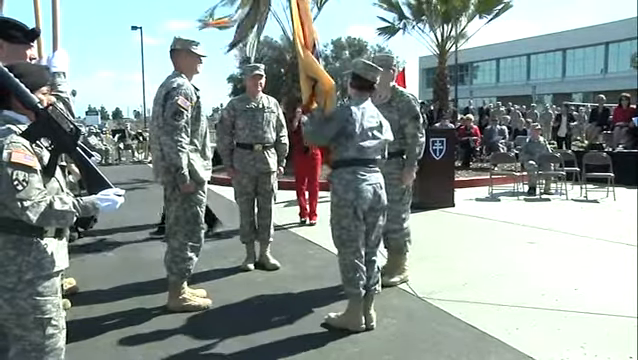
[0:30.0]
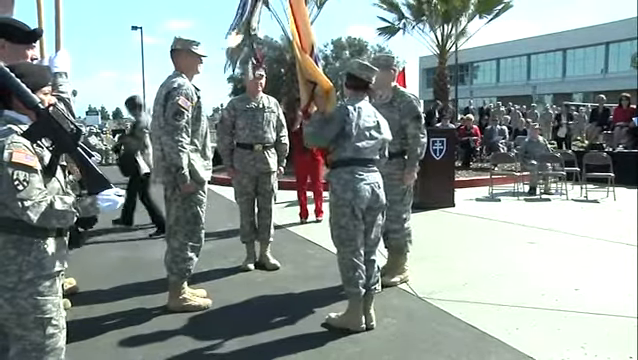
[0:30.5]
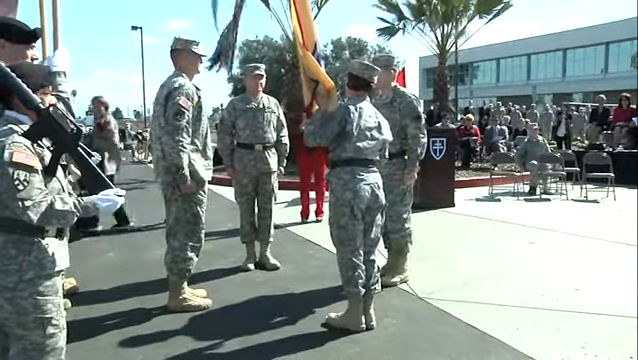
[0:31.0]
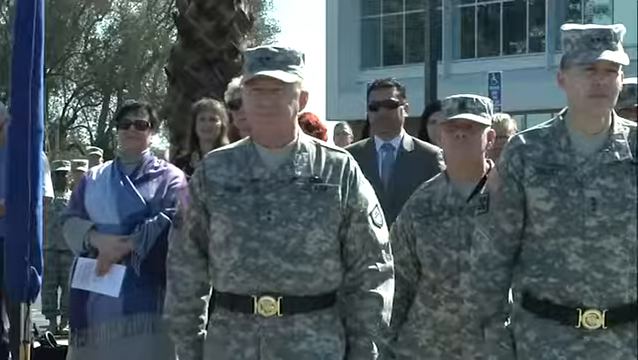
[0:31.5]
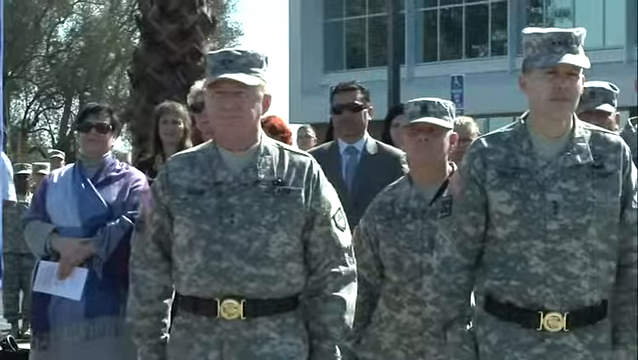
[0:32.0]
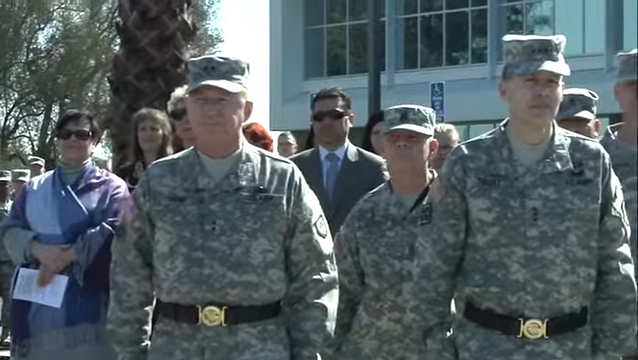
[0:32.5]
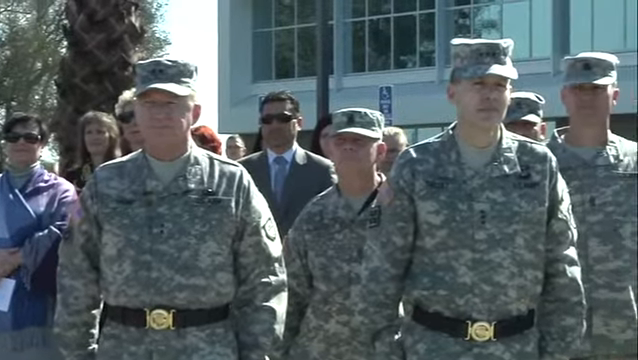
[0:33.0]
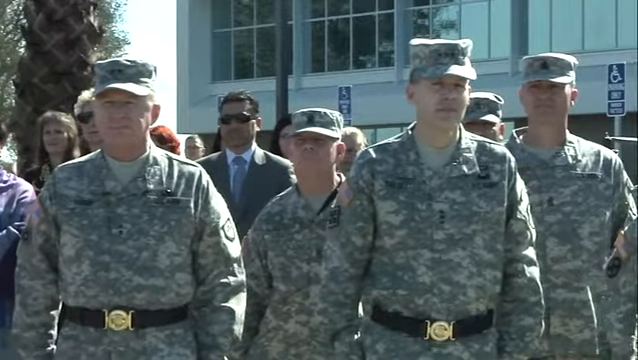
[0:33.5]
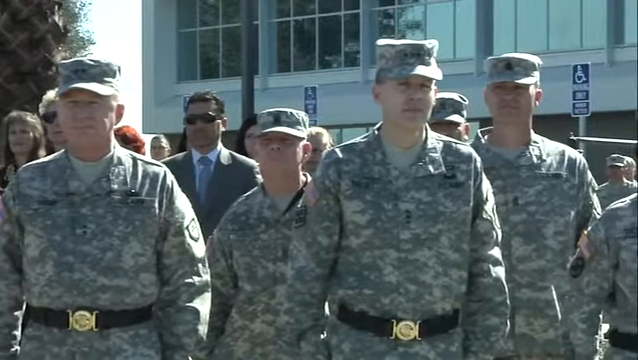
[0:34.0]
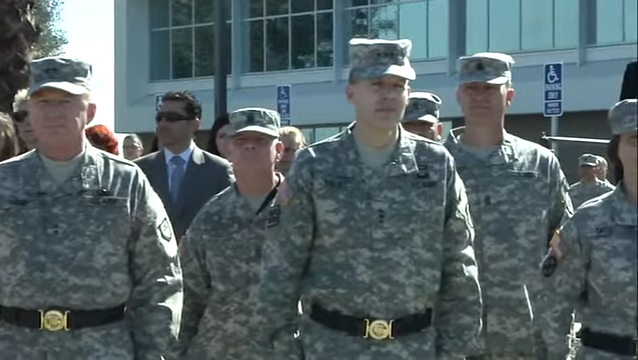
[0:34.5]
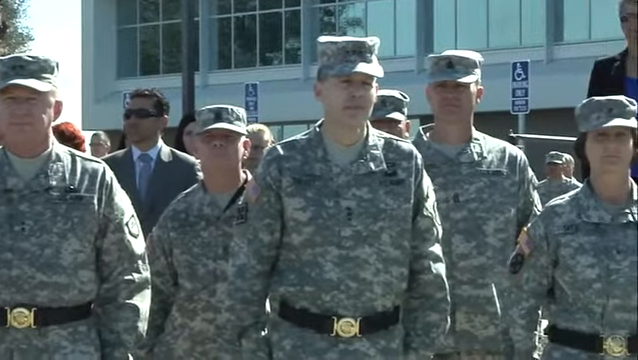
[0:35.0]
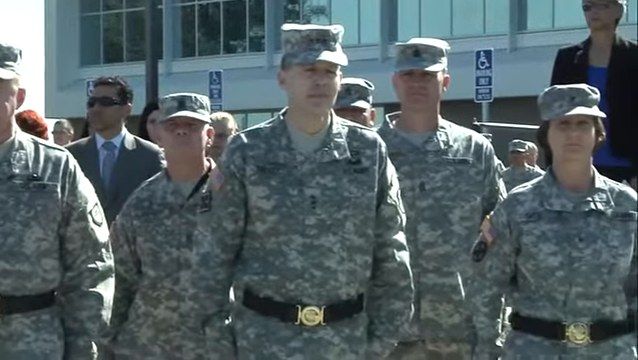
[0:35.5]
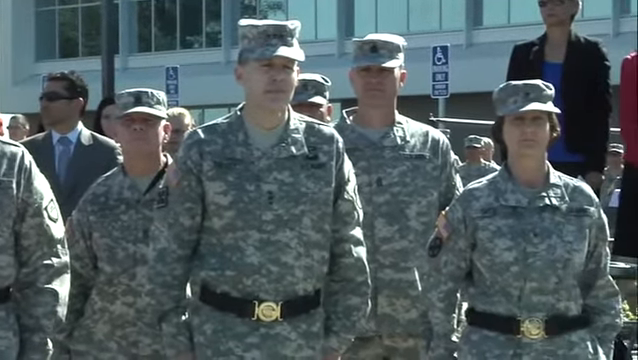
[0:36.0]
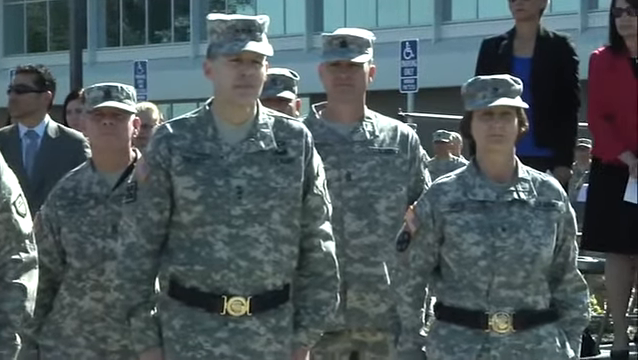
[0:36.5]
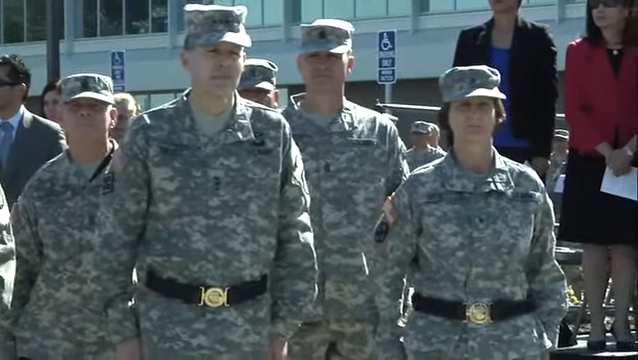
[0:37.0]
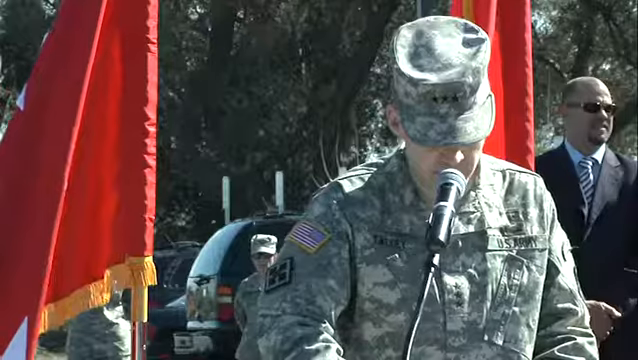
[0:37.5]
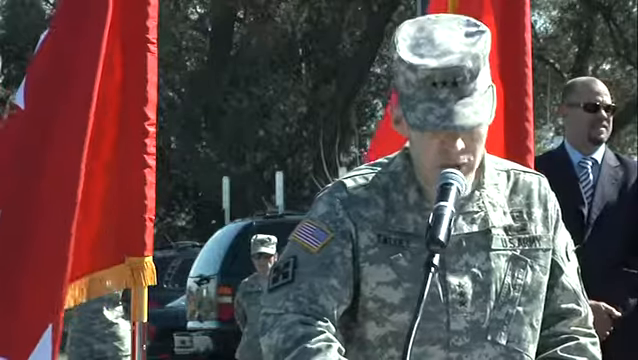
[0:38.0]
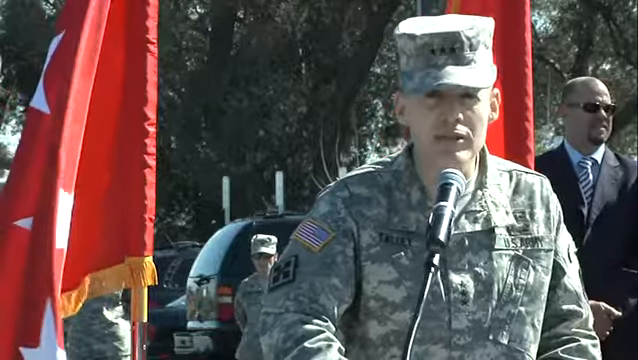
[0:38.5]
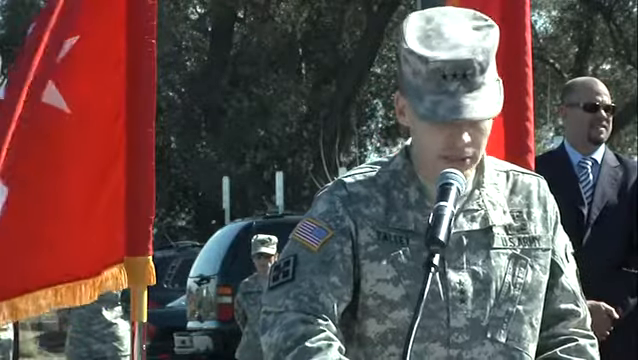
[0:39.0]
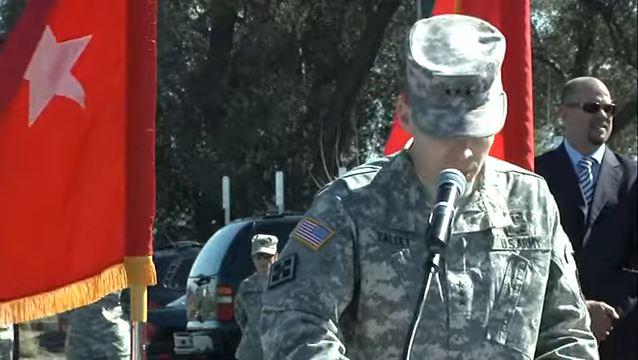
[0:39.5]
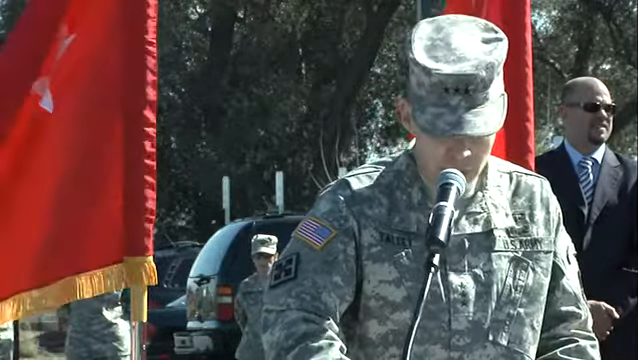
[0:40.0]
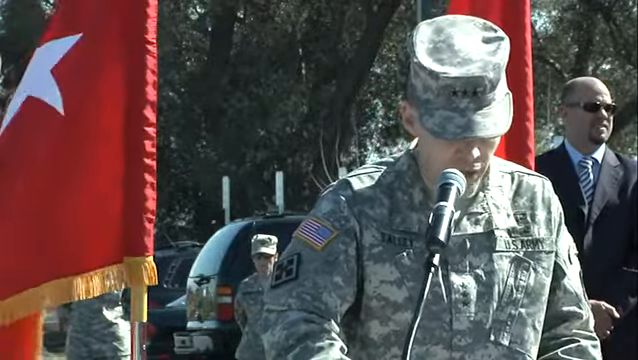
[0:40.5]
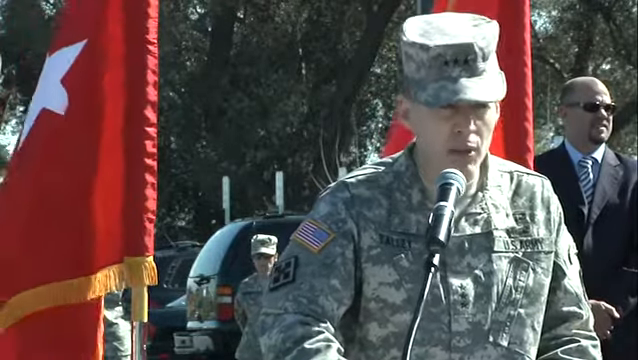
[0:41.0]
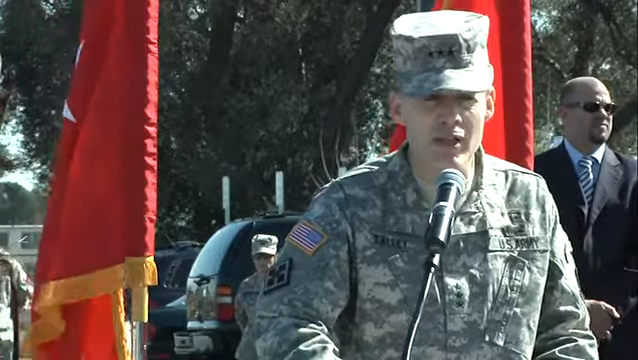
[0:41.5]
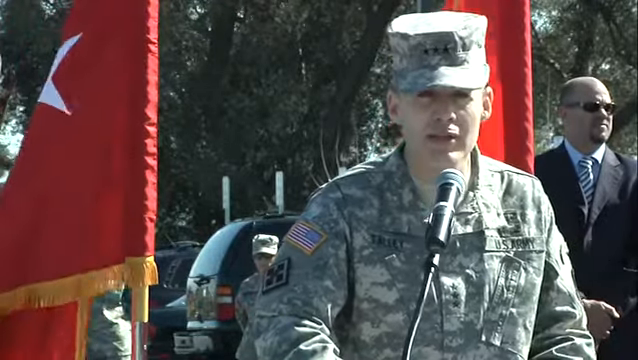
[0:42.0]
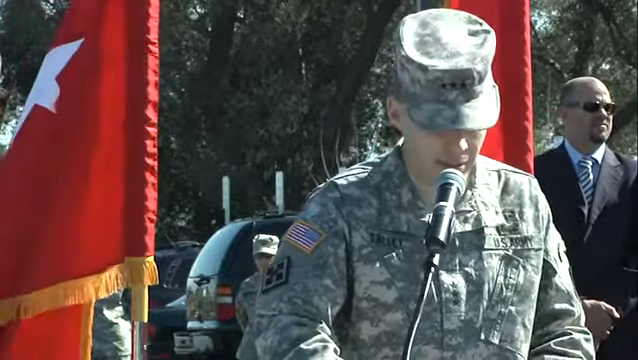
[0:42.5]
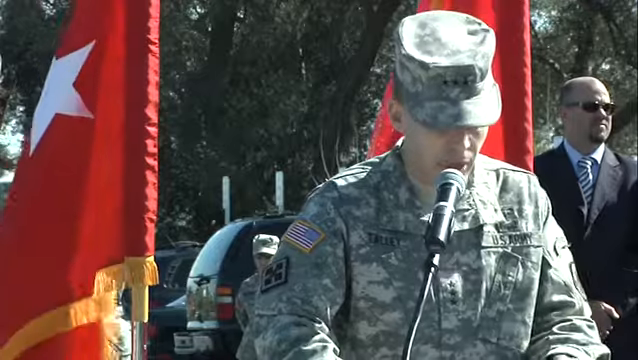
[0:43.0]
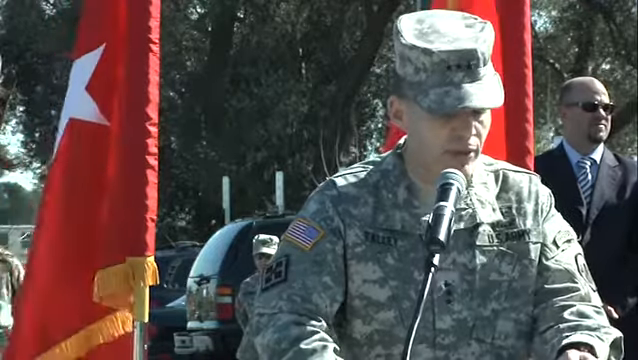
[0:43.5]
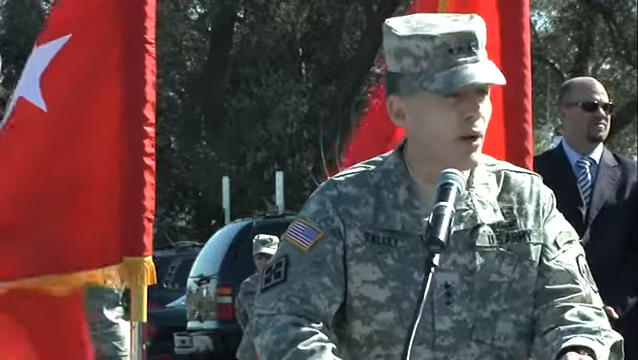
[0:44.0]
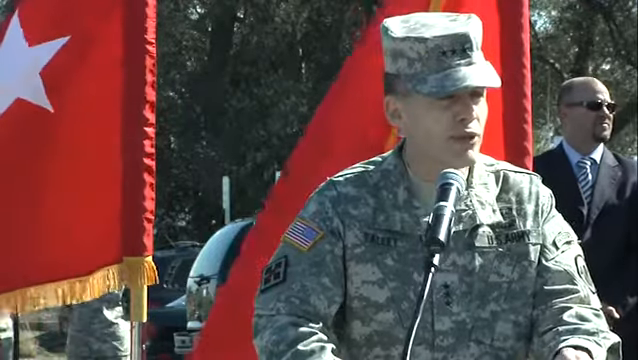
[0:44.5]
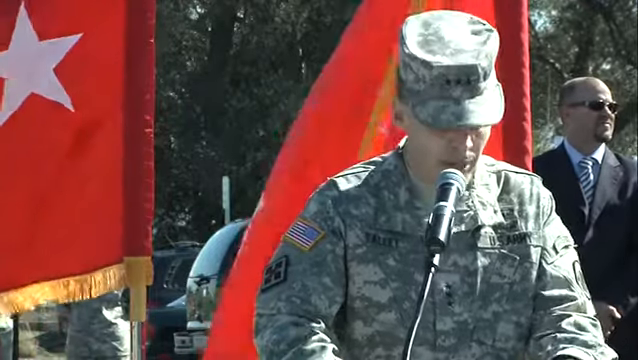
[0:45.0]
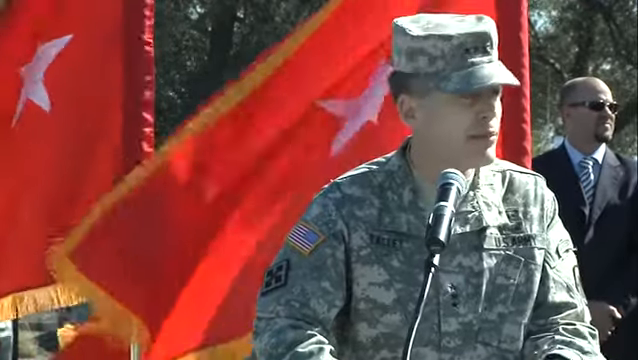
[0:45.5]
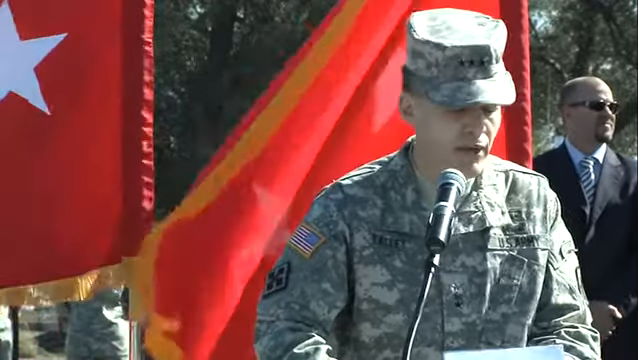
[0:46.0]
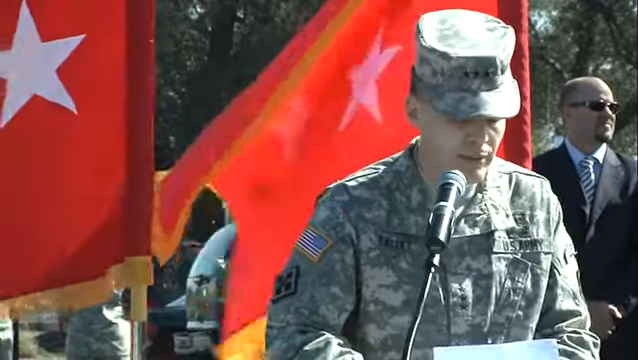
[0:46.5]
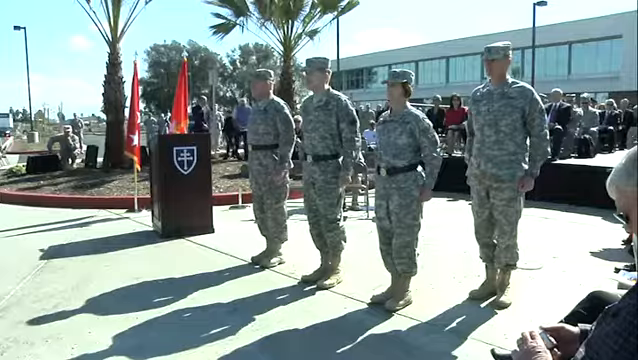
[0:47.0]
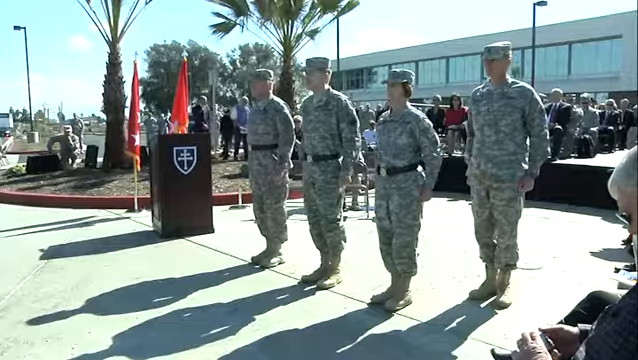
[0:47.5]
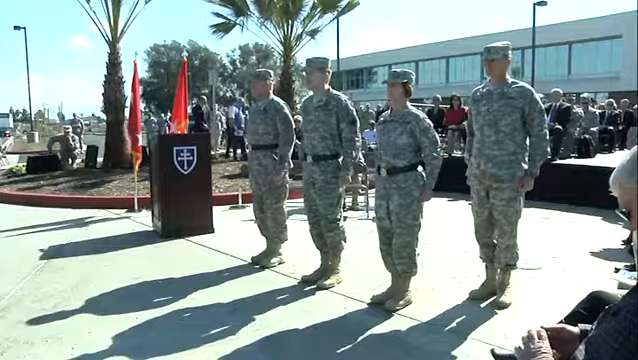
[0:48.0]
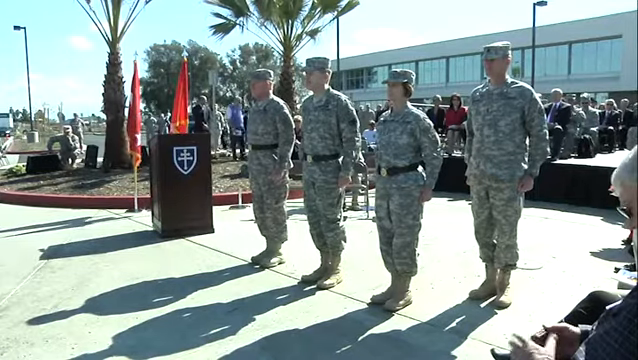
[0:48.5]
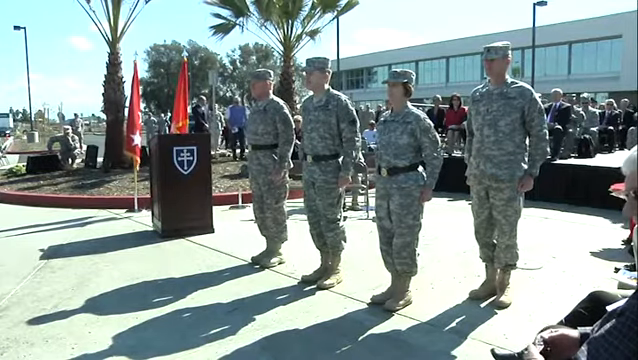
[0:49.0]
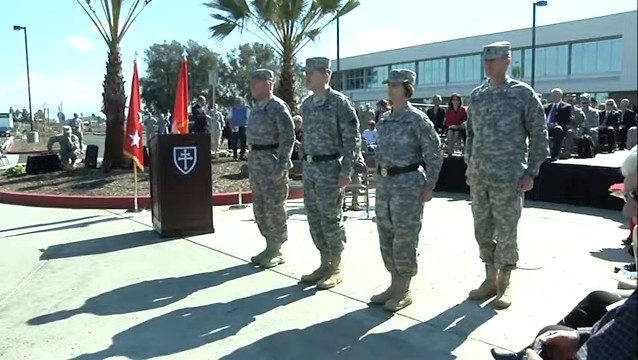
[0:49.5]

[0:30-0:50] Outdoors, a man in a military uniform of camo pants, camo shirt and camo hat is shown, with ordinary civilians in suits and regular clothes behind him. The camera slowly pans to the right, showing other men all wearing camouflage clothing and camouflage hats, and at the end of that group is a woman in camouflage clothes and a camouflage hat. The video cuts to a man standing at a podium with a black microphone on it, speaking directly into the microphone. He wears a green camouflage hat with three stars on the front, and on his right shoulder is an American flag patch. Behind him are two large flags that are white with orange trim along the edges and one white star.